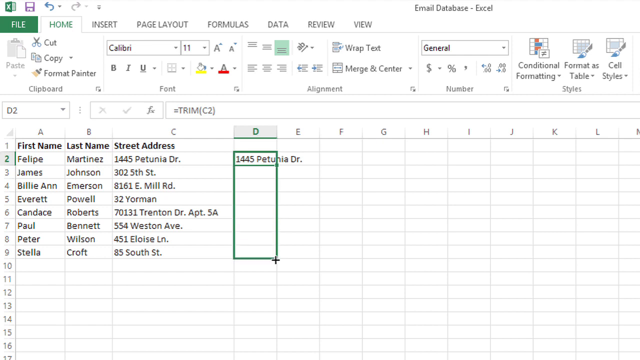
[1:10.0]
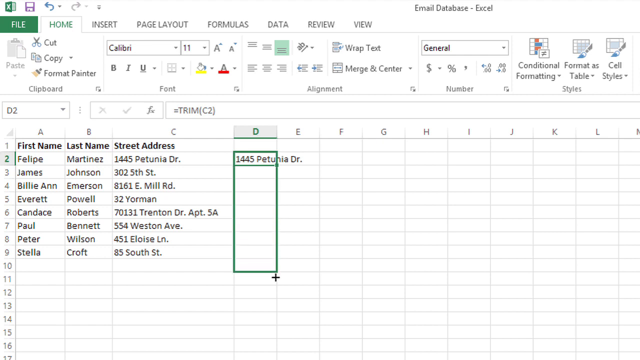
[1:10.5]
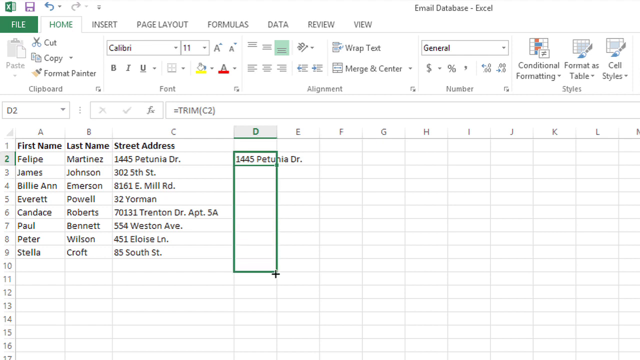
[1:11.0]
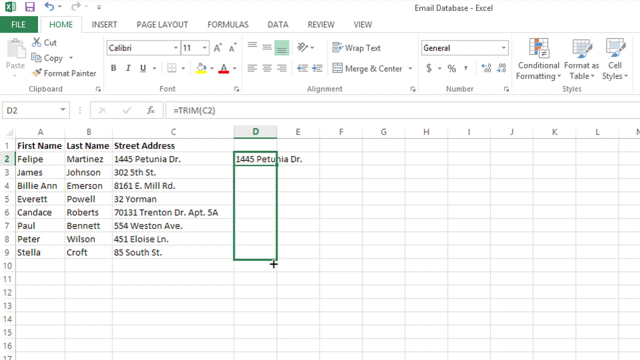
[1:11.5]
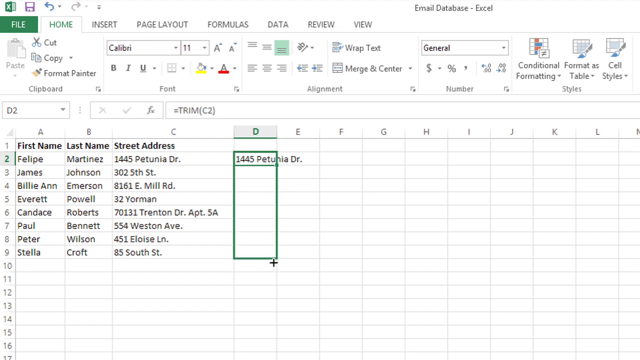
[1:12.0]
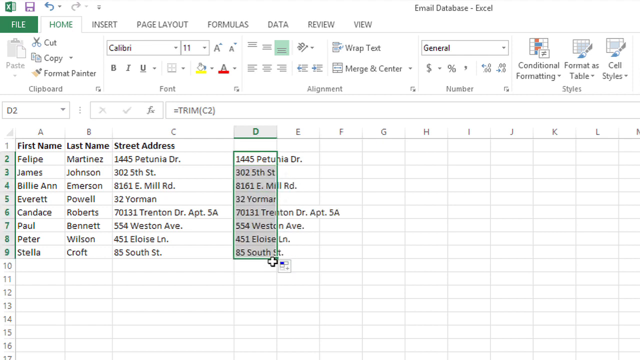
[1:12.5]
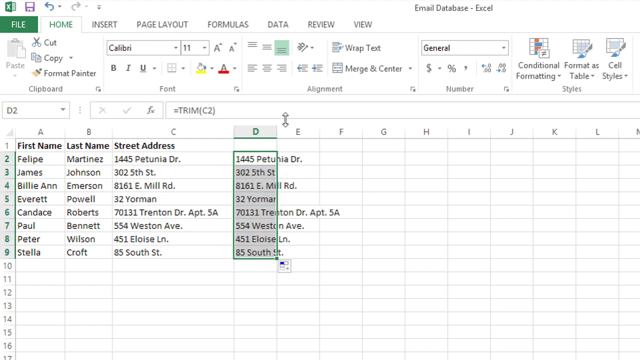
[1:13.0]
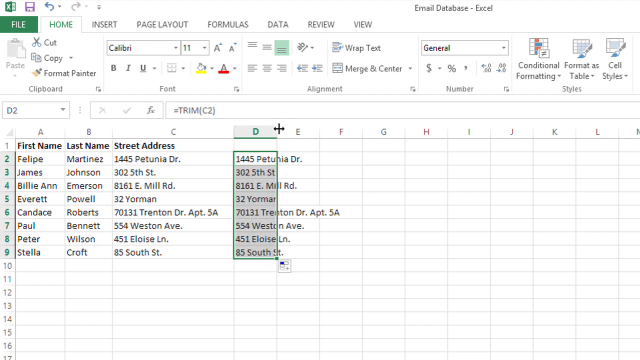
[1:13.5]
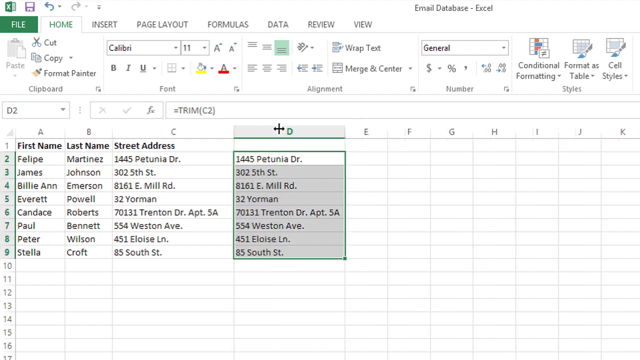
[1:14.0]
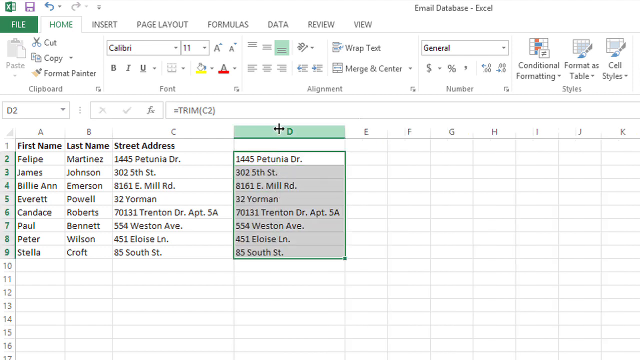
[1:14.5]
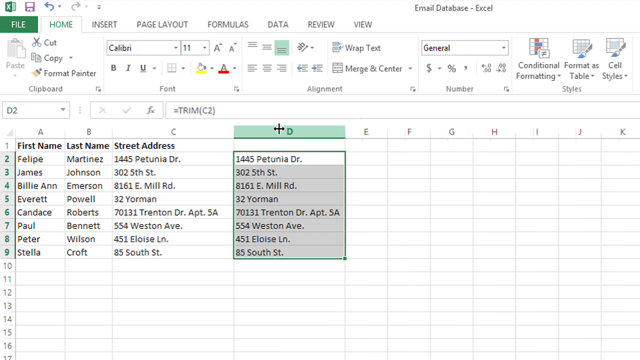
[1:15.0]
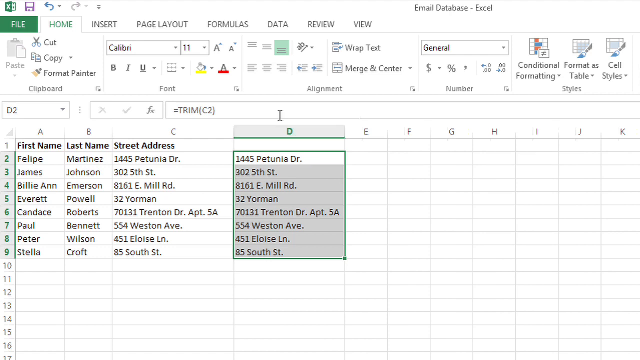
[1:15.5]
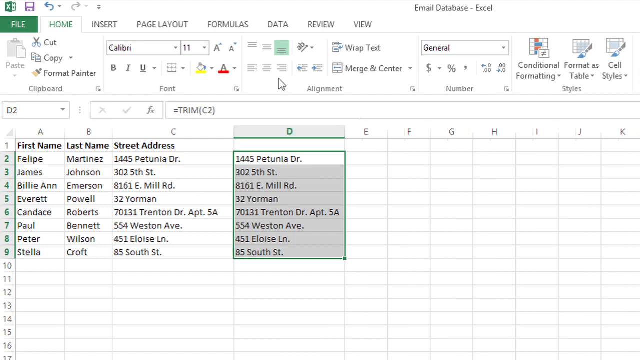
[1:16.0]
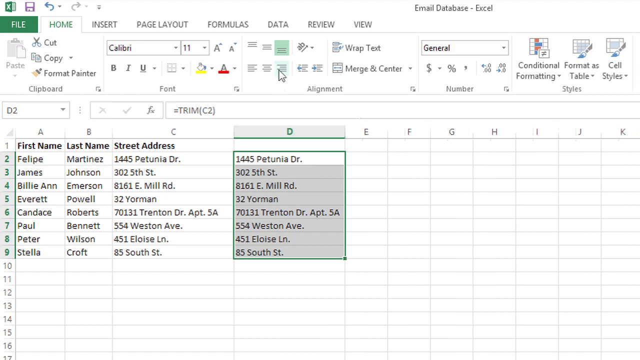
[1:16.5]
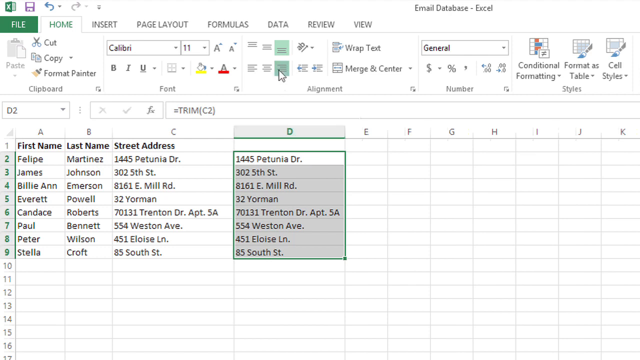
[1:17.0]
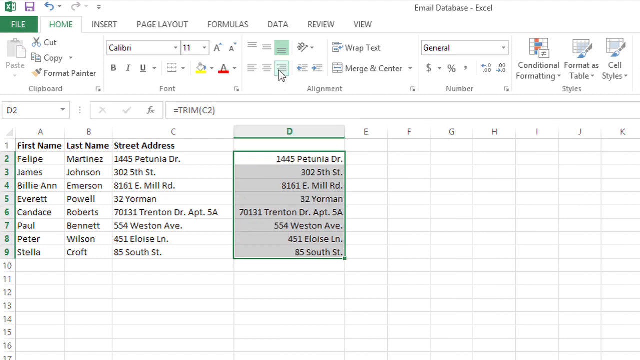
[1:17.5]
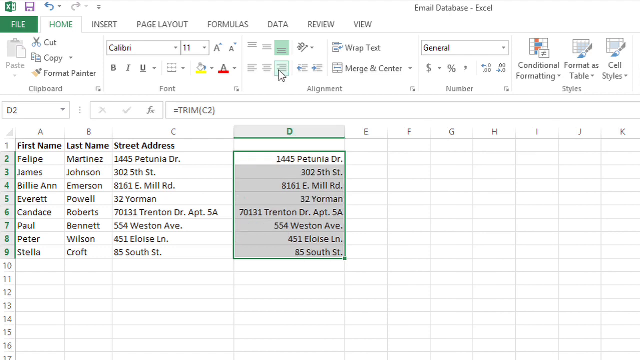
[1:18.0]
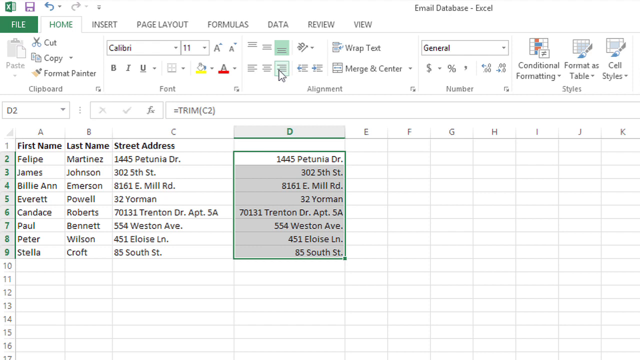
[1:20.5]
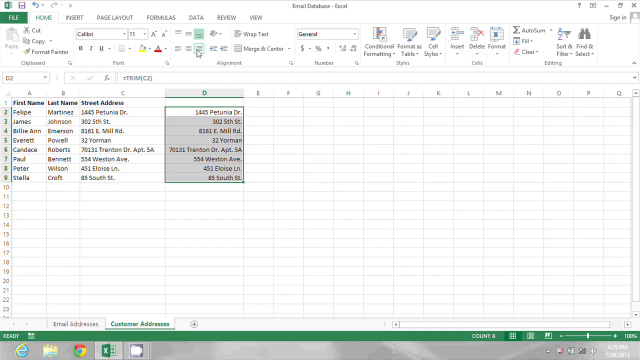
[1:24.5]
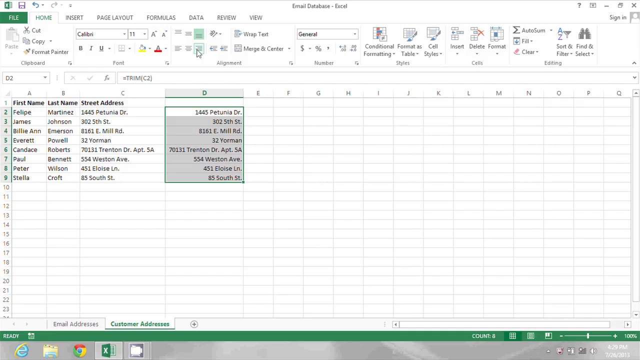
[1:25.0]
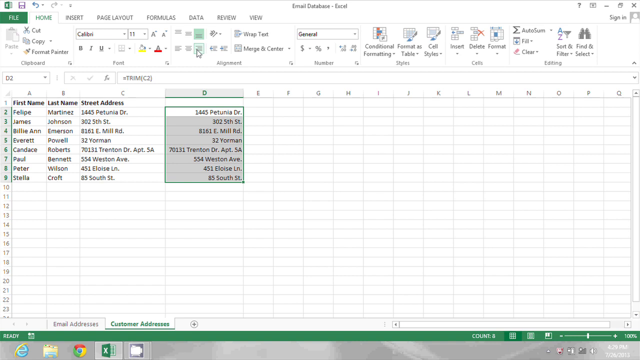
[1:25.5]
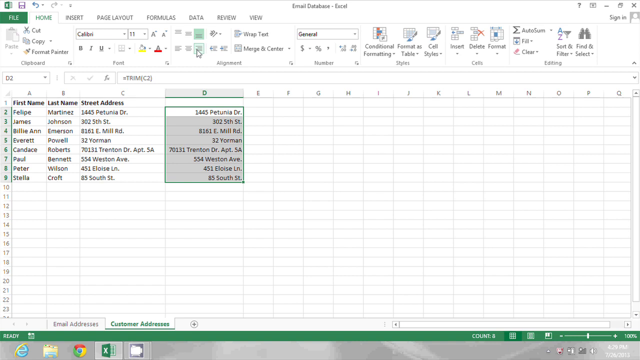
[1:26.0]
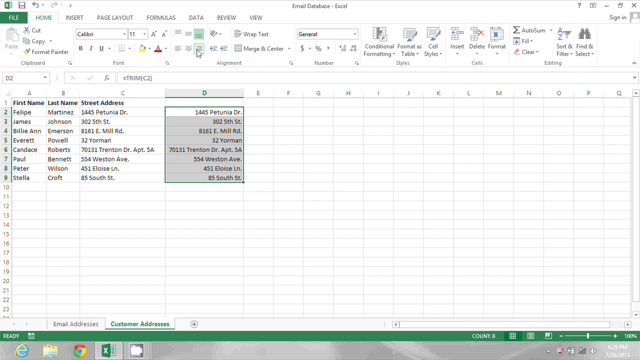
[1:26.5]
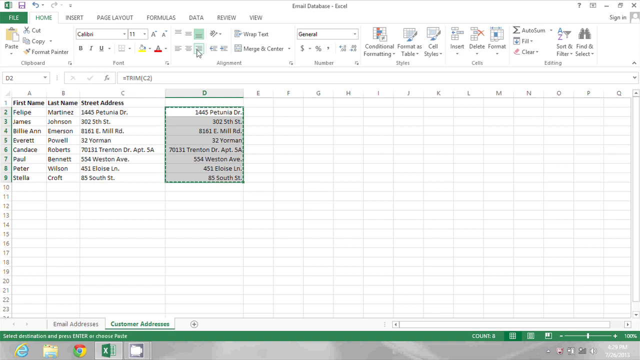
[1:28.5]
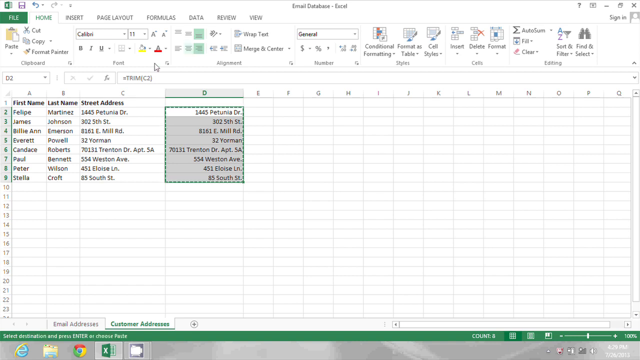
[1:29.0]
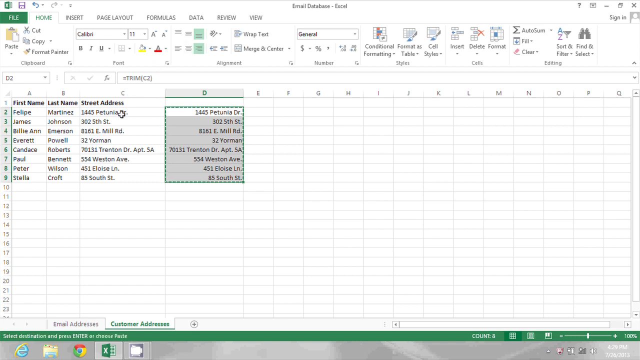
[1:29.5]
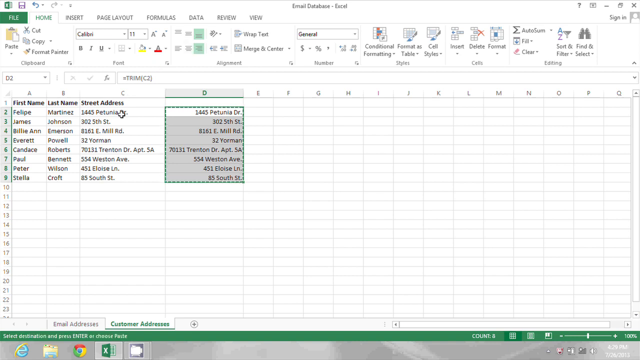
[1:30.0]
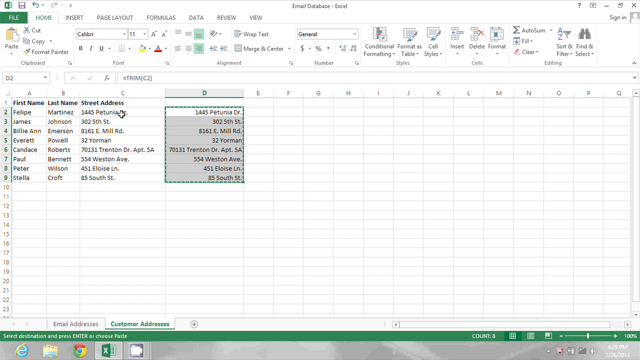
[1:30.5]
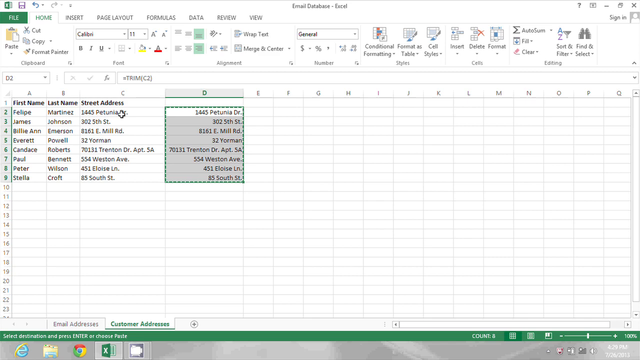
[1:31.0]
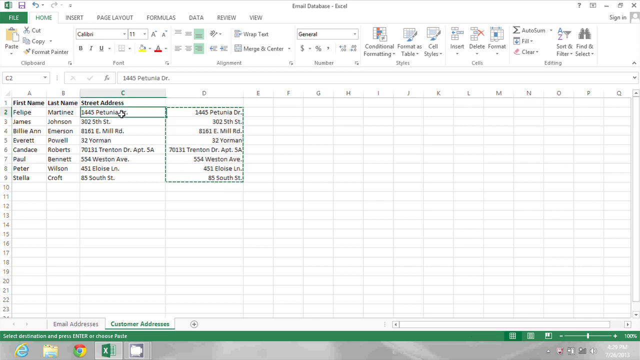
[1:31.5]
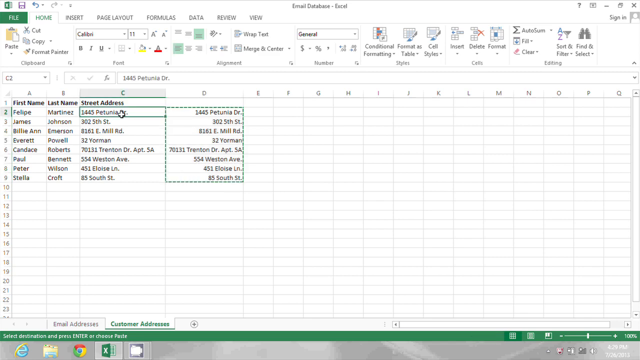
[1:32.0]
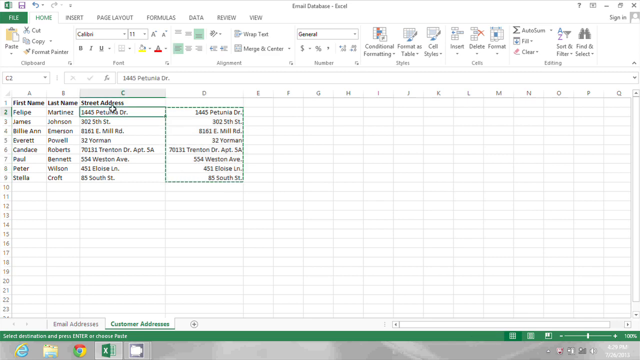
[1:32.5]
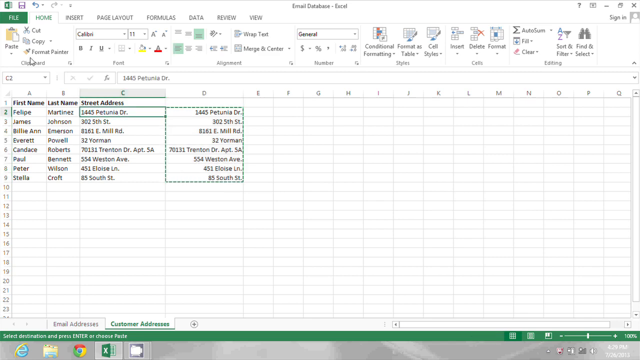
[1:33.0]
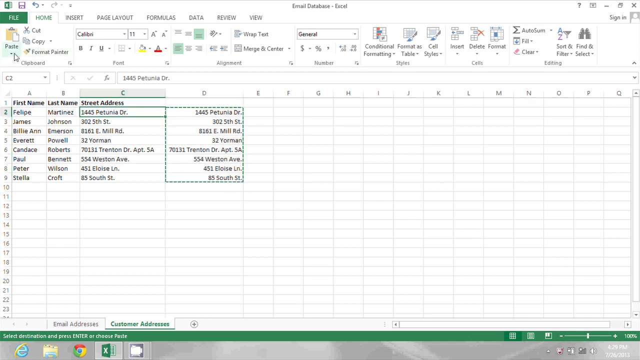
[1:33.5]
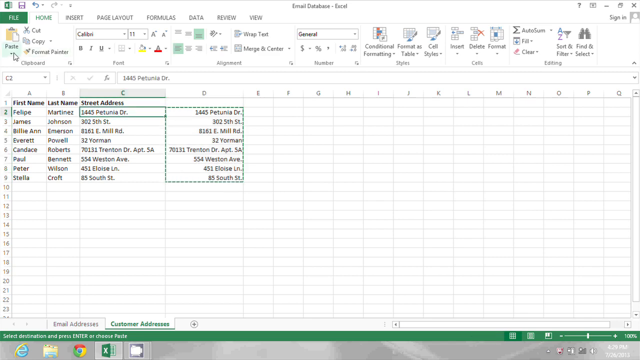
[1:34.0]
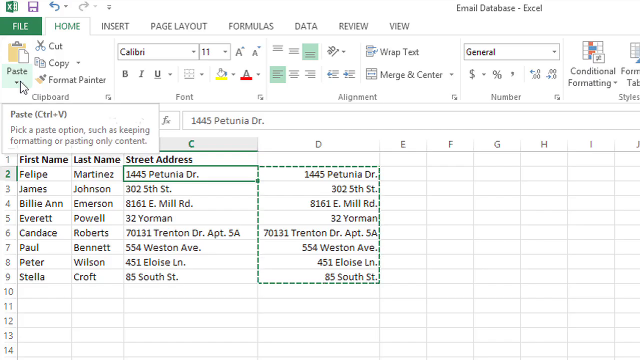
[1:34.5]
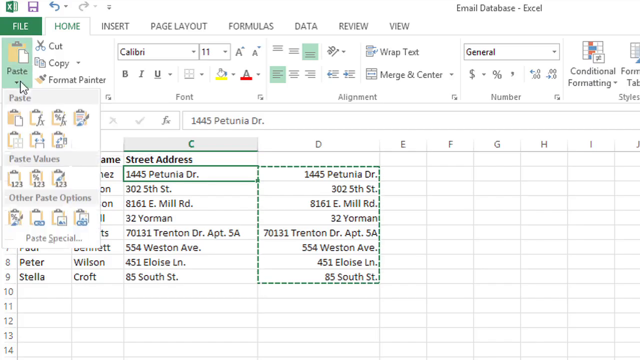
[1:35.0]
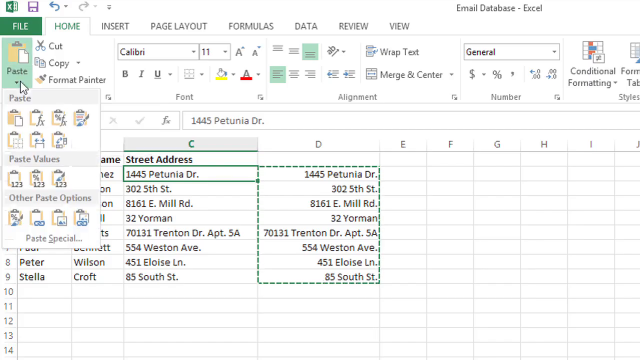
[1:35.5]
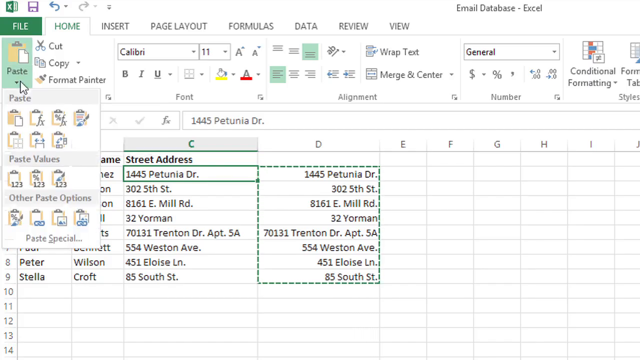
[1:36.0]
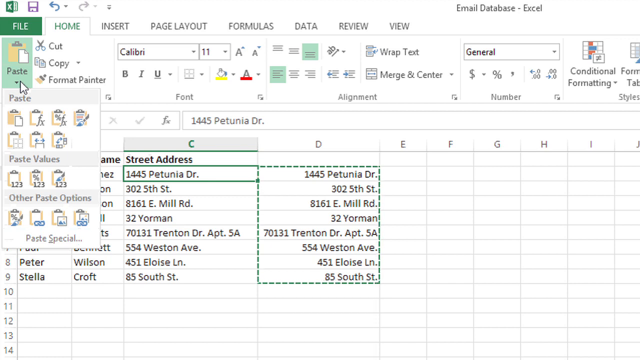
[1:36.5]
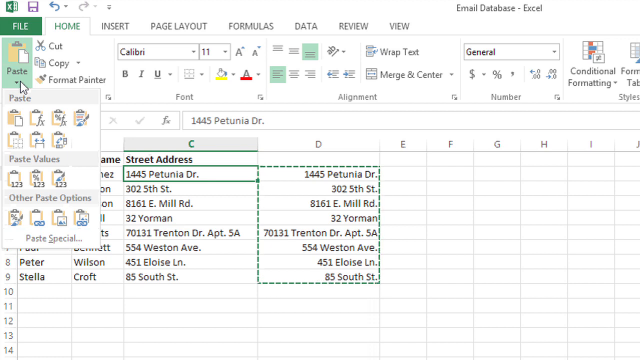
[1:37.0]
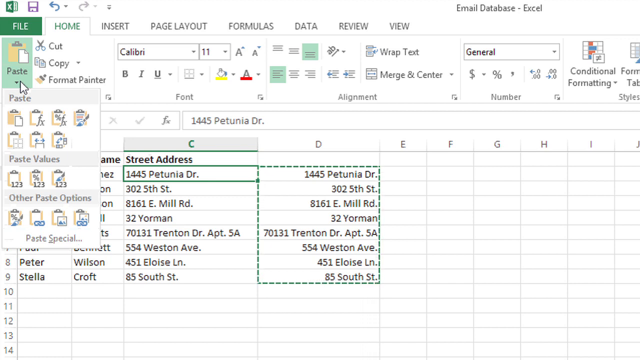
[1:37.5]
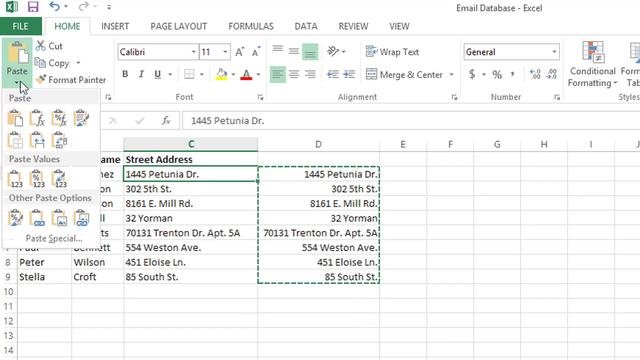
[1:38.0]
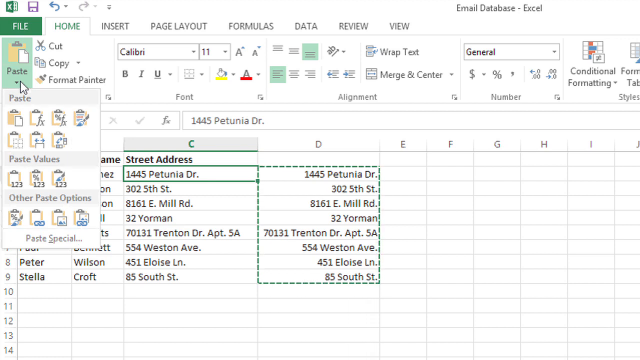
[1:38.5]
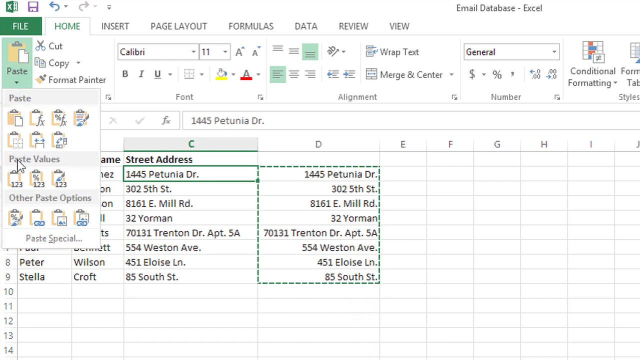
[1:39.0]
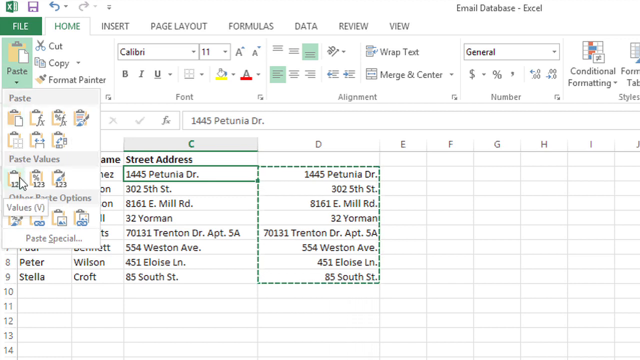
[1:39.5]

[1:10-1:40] The same function has been copied down the rest of column D, so the addresses from column C now appear in column D, and it has been formatted to the right. She drags through the rest of column D to copy it. She then goes to the top to show where the paste format option is, apparently for copying and pasting the old-fashioned way. The worksheet lists eight people, with first names, last names and street addresses.